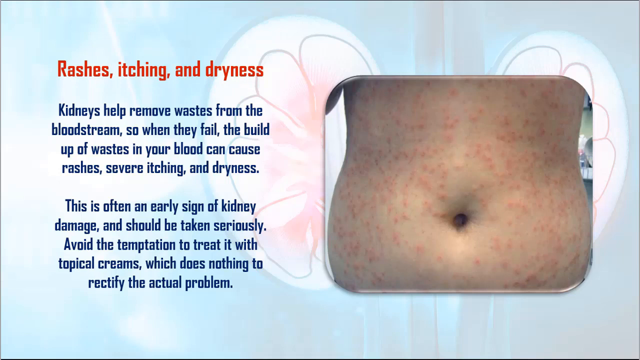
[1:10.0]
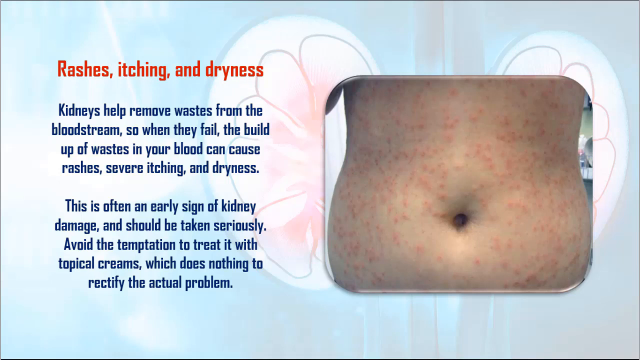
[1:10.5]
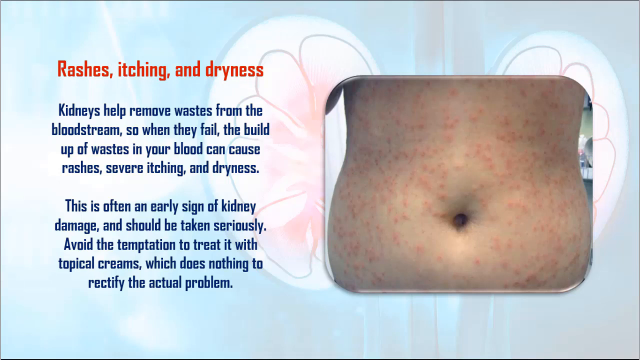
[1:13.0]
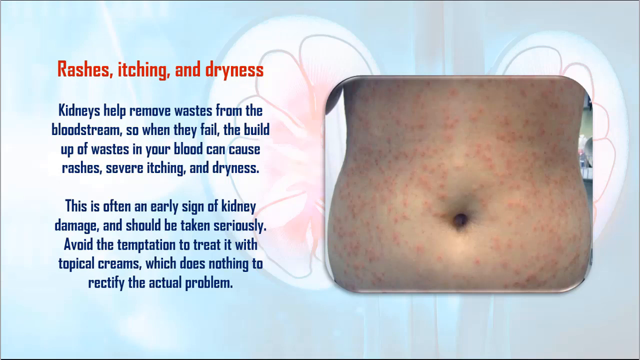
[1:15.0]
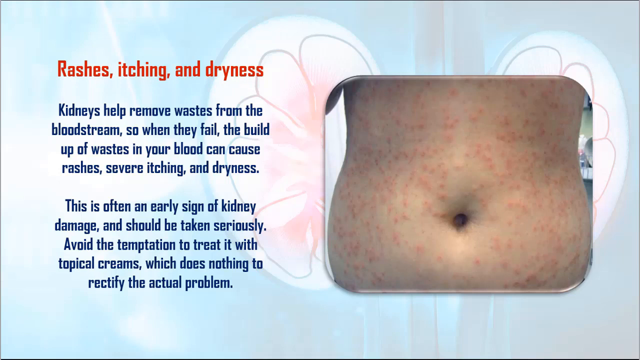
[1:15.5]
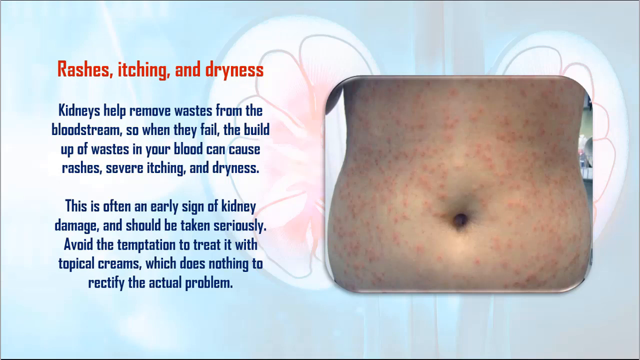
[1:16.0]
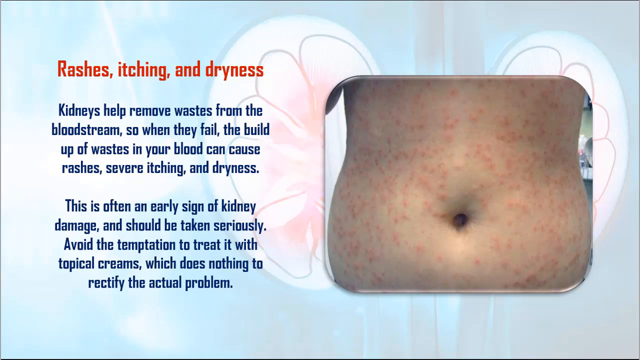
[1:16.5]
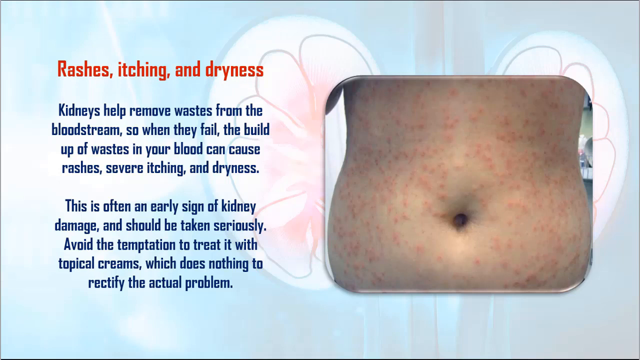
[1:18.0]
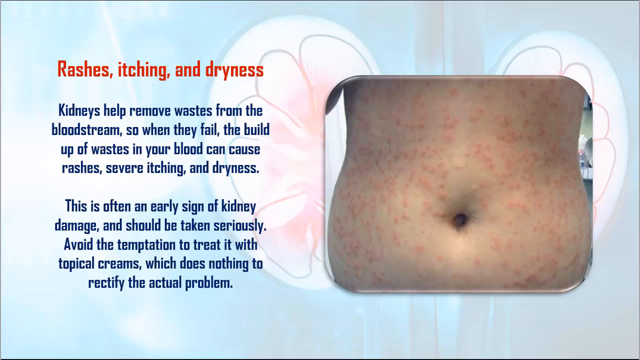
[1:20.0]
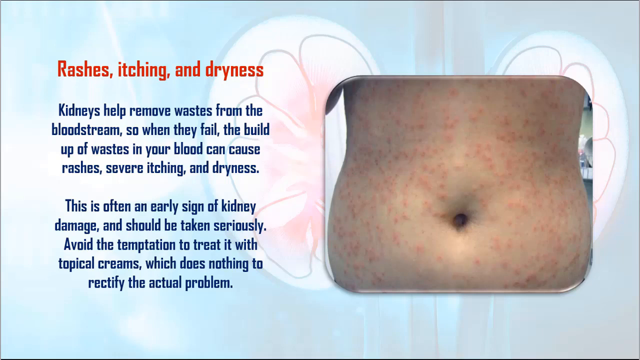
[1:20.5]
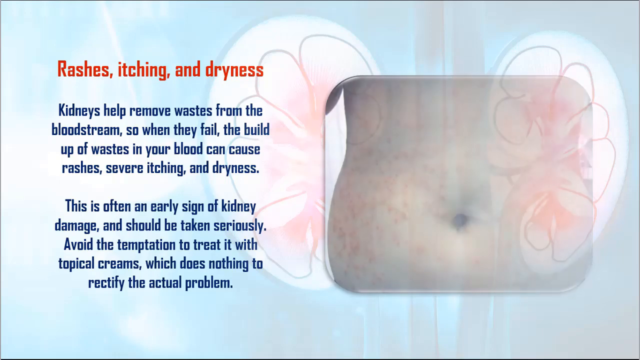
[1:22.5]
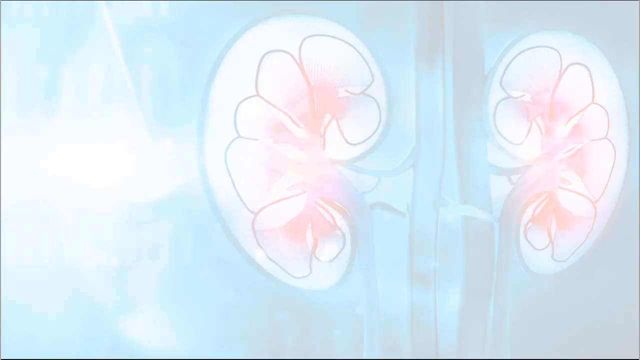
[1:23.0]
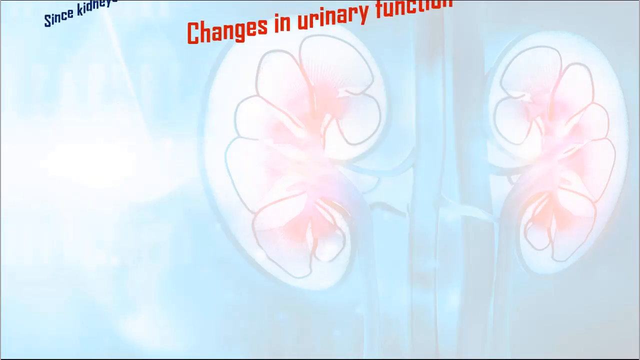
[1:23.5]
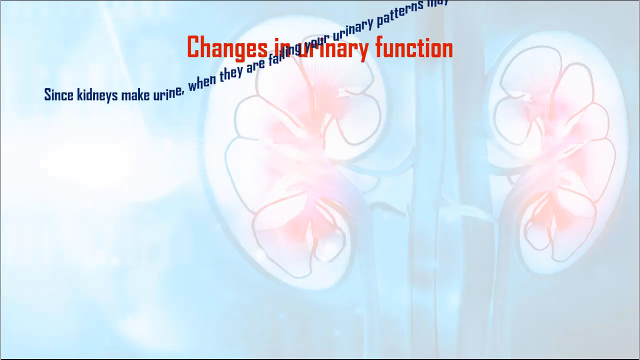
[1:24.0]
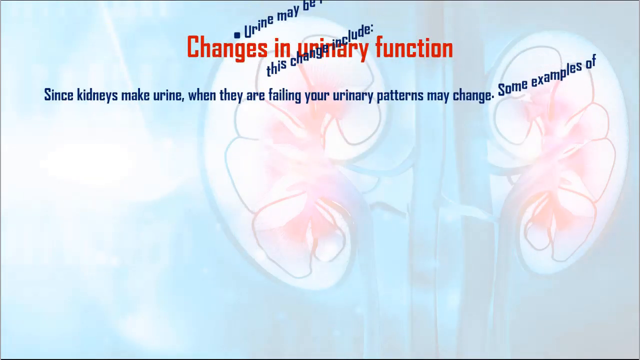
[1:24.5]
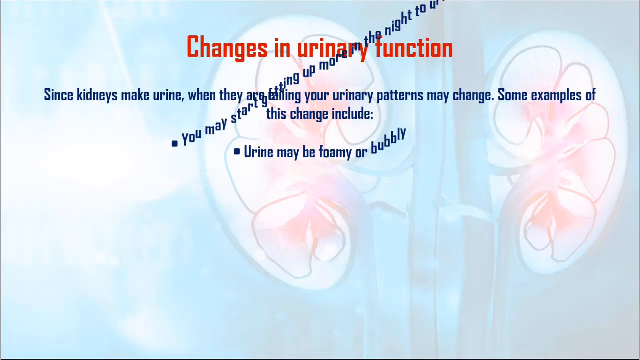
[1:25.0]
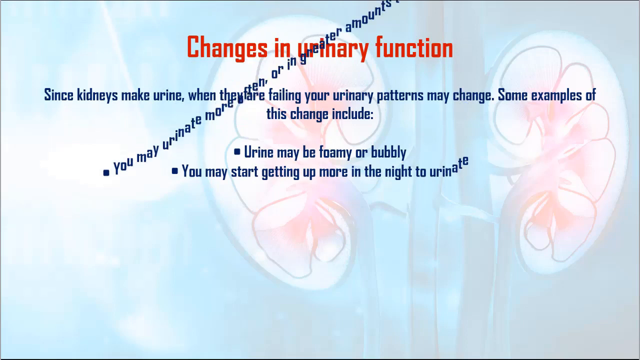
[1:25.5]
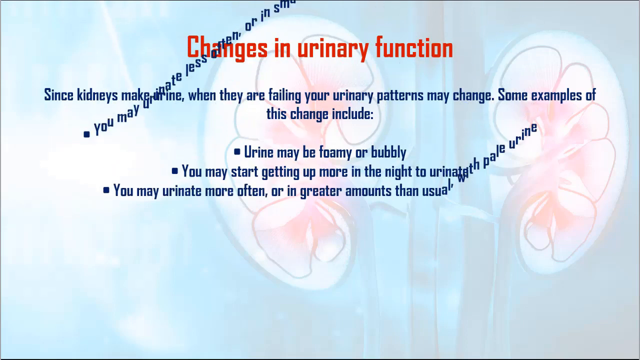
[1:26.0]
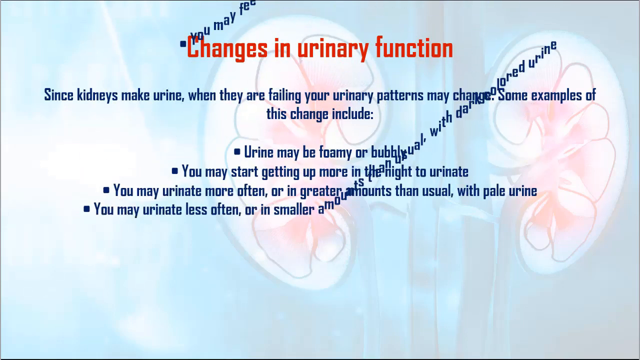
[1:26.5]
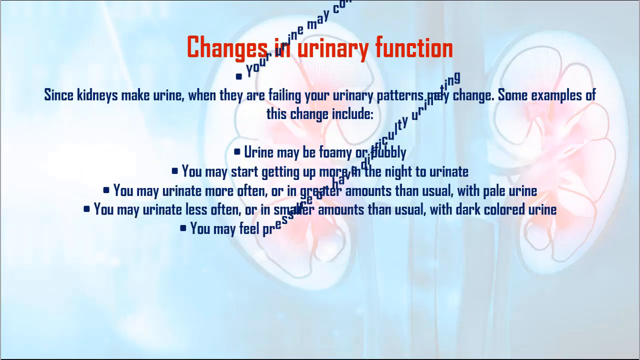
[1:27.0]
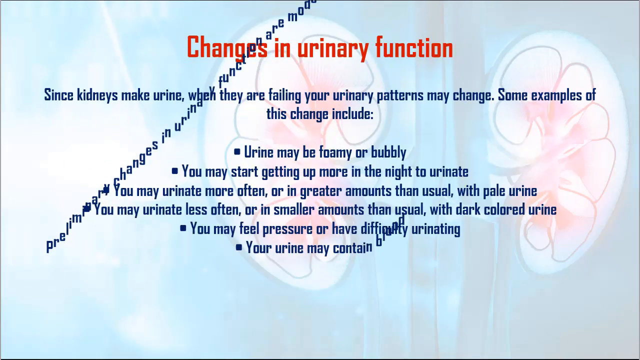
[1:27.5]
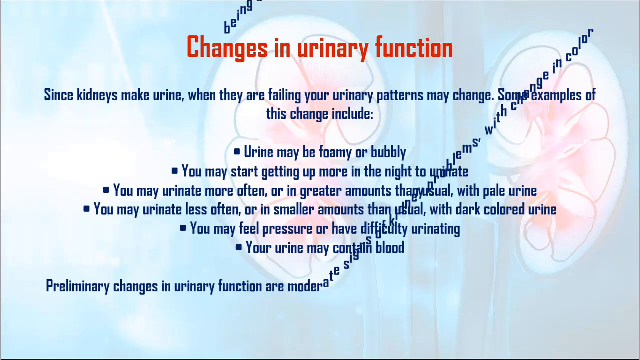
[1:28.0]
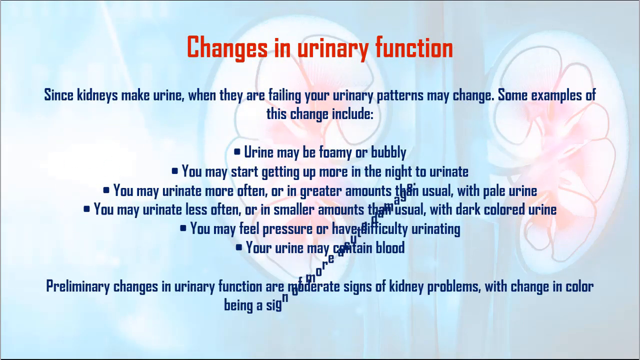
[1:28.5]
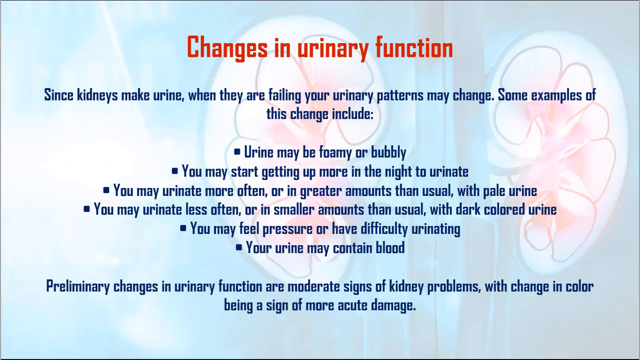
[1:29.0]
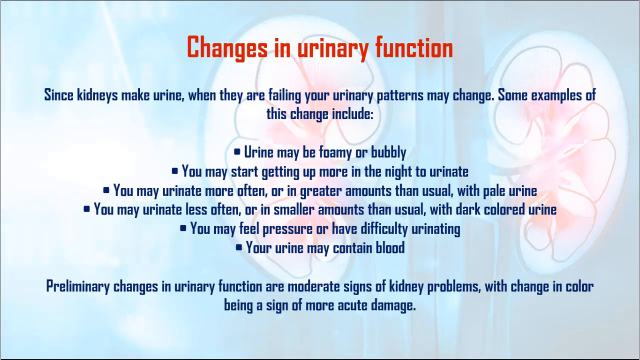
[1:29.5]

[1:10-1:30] In the background is a drawing of two mostly white kidneys on a bluish white background. Both kidneys contain ovals with a black outline and small areas of pink within them, and two tubes are between the two kidneys. On the right side is a picture of someone's belly with a red rash on it. On the left side is a red title, "rashes, itching and dryness", with two paragraphs below about how kidneys help remove waste and what can happen if they do not remove the waste from the bloodstream. After a few seconds, the image and text disappear and are replaced by more text, with the background unchanged. At the top is a red title, "changes in urinary function". Below it, a sentence explains that kidneys make urine and when they fail, urinary patterns may change. Below that are about six bullet points, each describing symptoms relating to how and when a person urinates that can indicate kidney damage. At the bottom of the screen, a sentence states that preliminary changes in urinary function are moderate signs of kidney problems, with change in color being a sign of more acute damage.